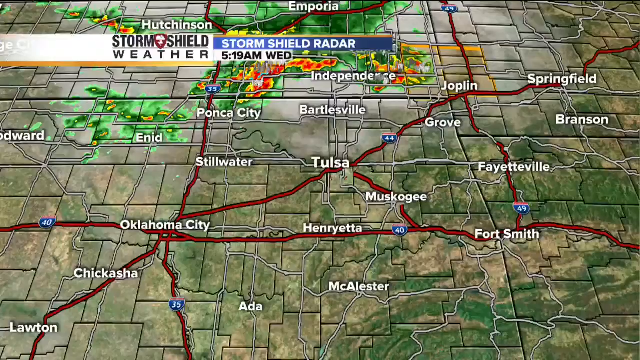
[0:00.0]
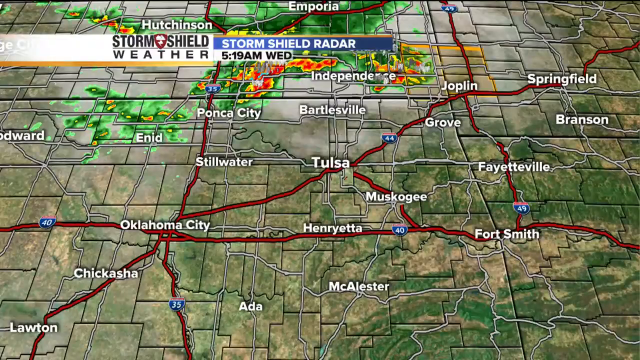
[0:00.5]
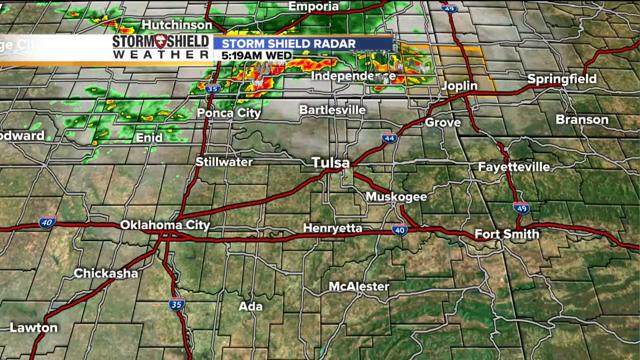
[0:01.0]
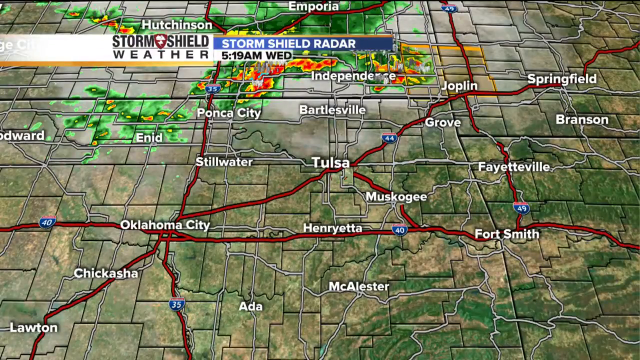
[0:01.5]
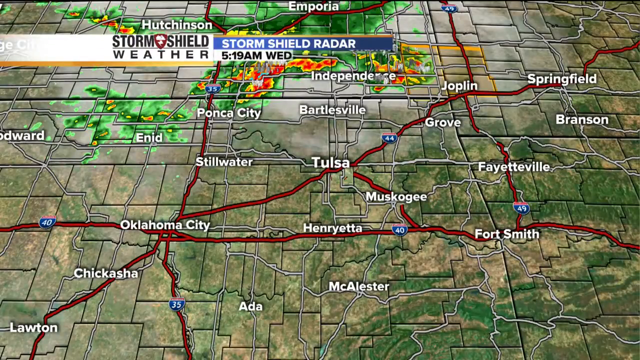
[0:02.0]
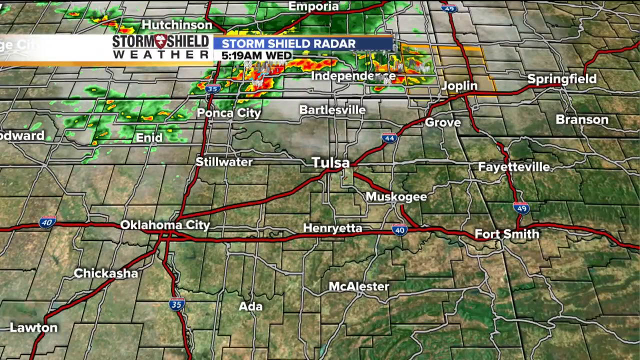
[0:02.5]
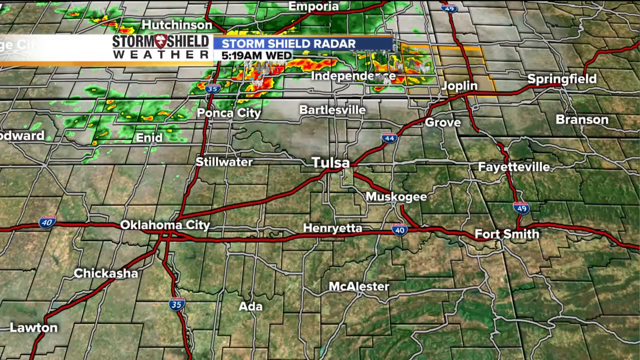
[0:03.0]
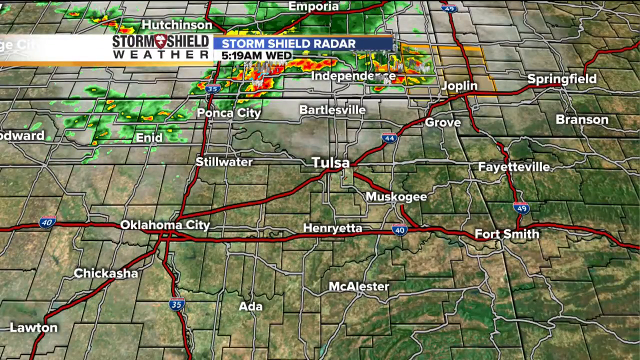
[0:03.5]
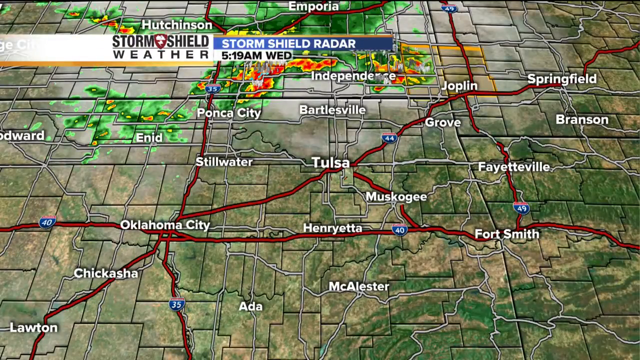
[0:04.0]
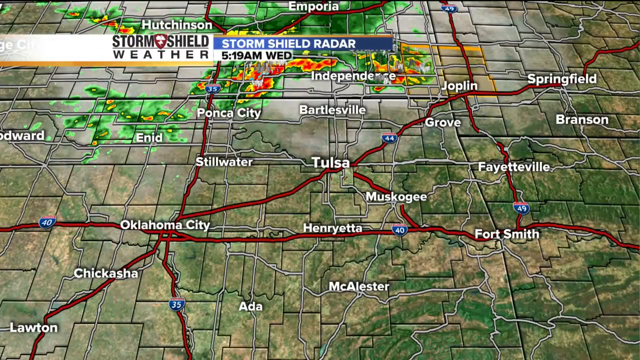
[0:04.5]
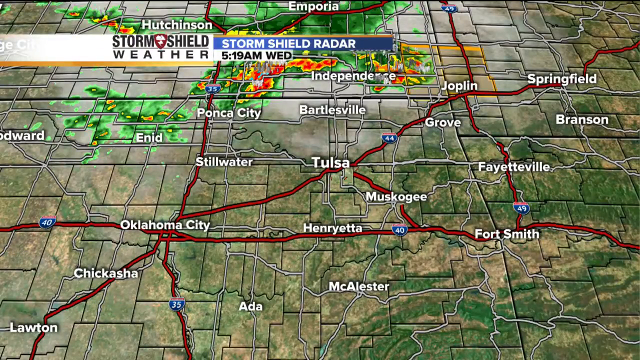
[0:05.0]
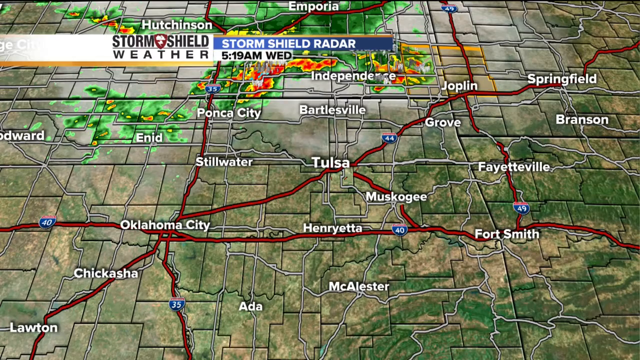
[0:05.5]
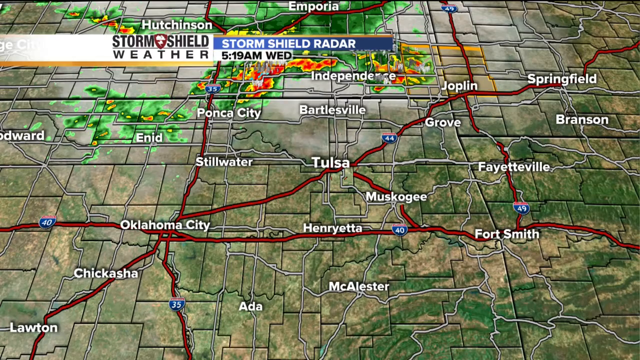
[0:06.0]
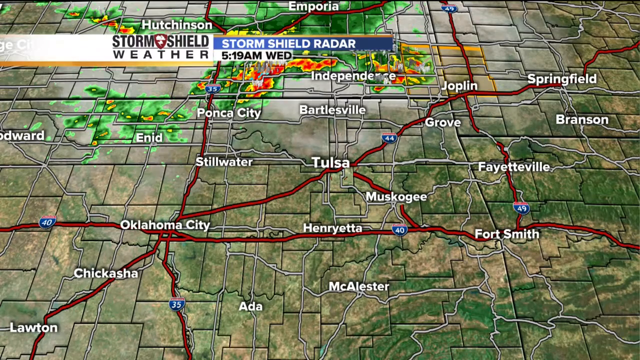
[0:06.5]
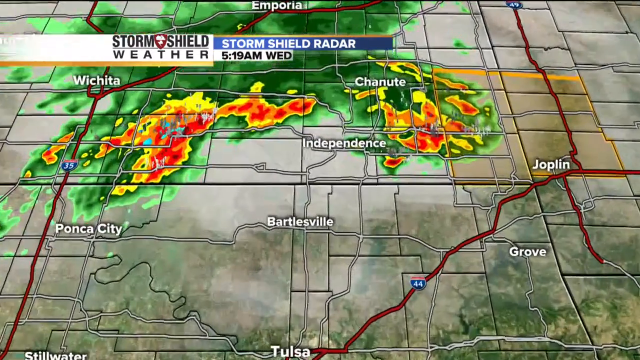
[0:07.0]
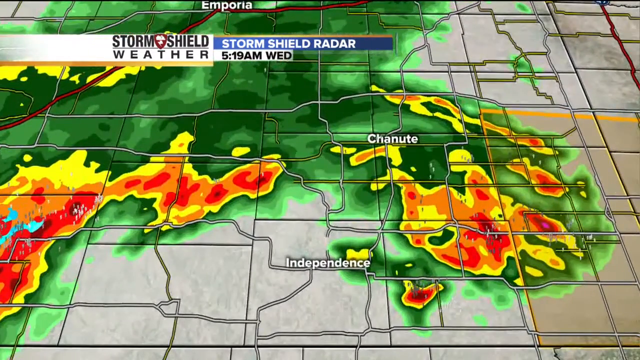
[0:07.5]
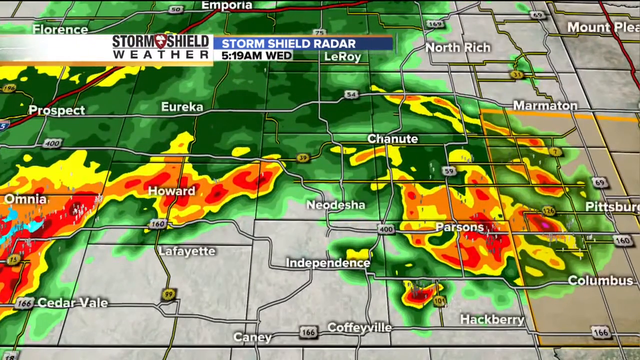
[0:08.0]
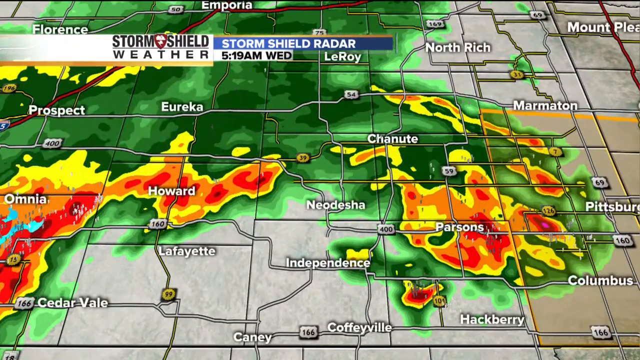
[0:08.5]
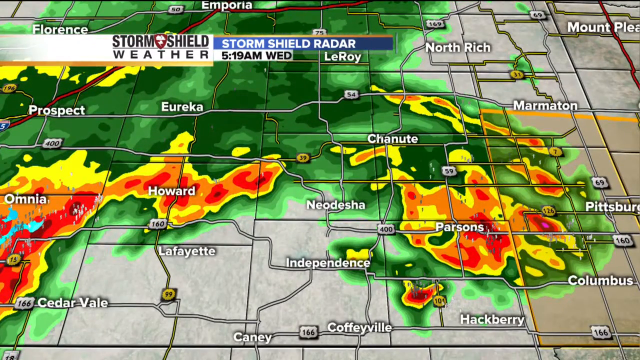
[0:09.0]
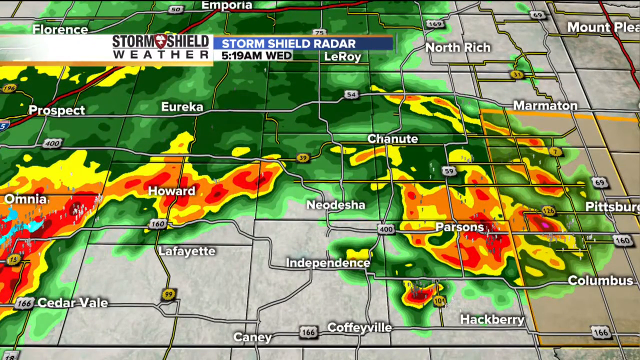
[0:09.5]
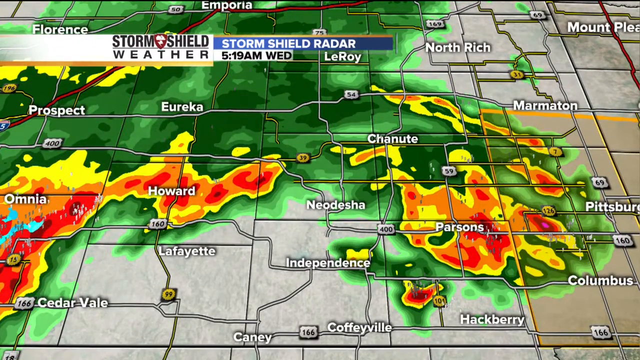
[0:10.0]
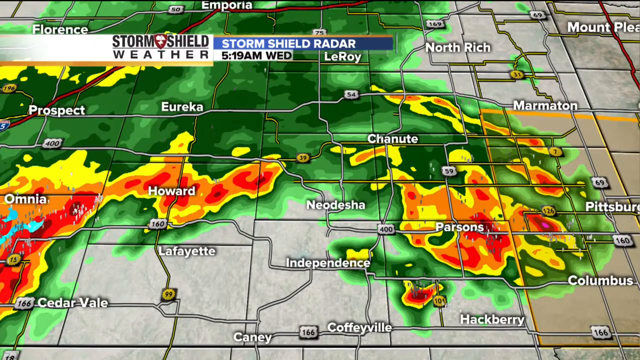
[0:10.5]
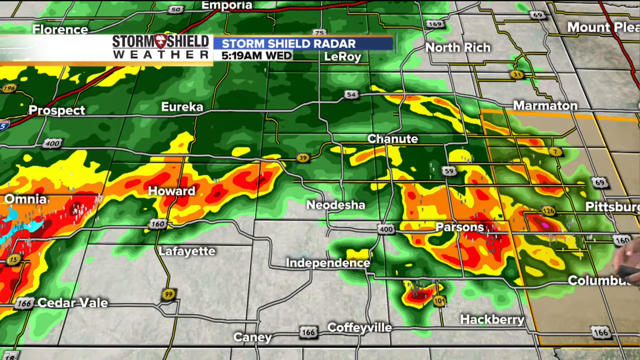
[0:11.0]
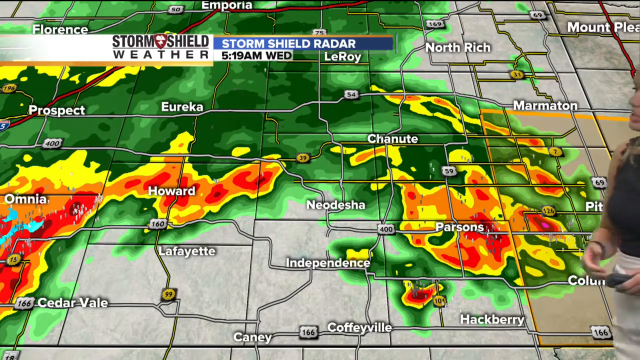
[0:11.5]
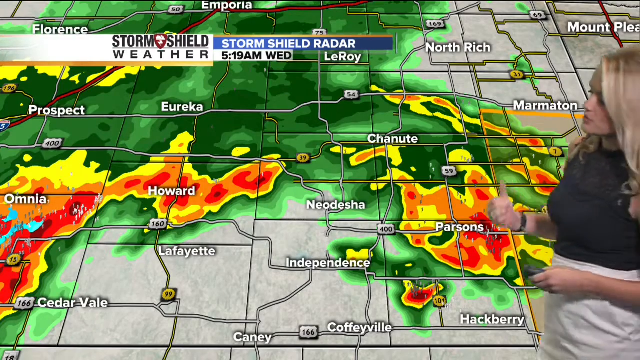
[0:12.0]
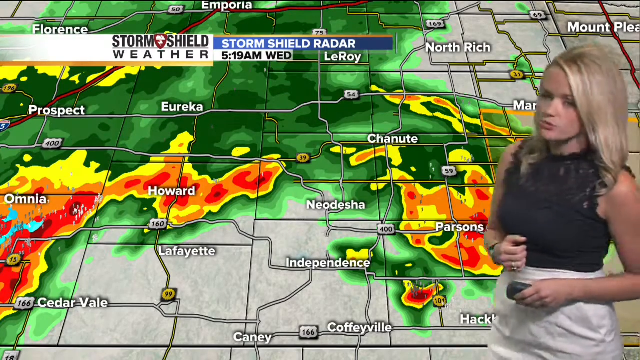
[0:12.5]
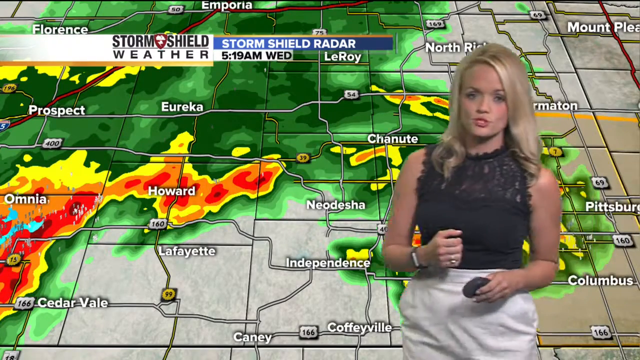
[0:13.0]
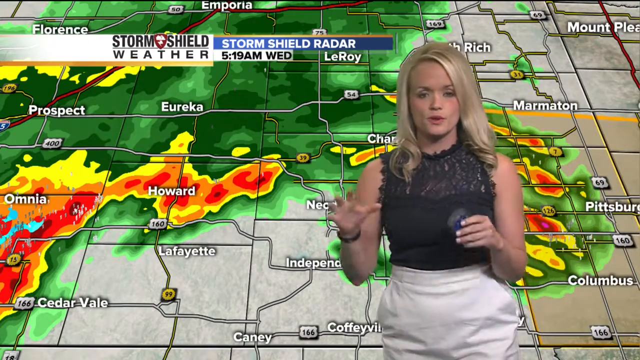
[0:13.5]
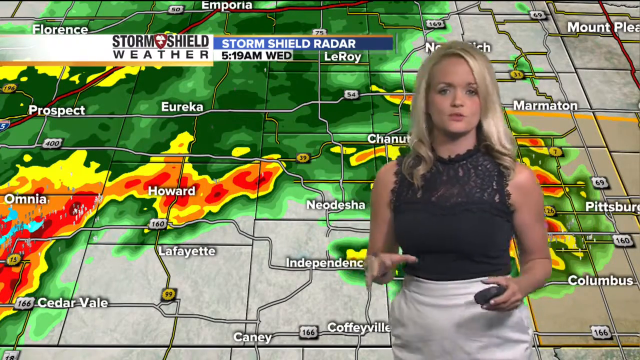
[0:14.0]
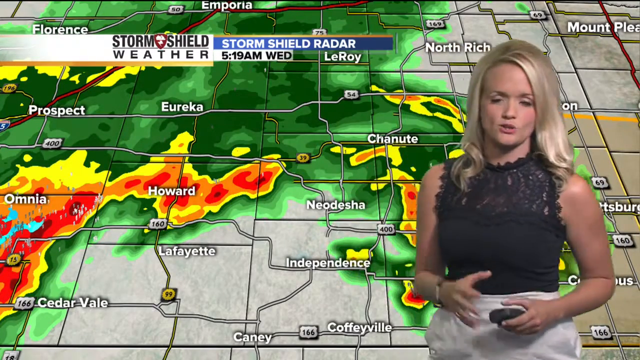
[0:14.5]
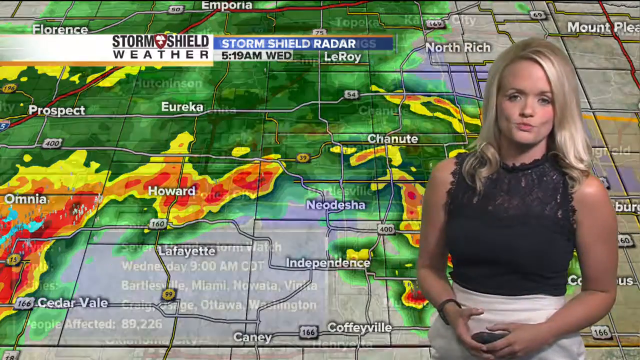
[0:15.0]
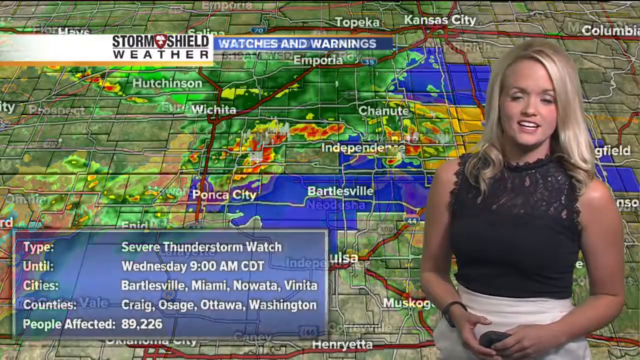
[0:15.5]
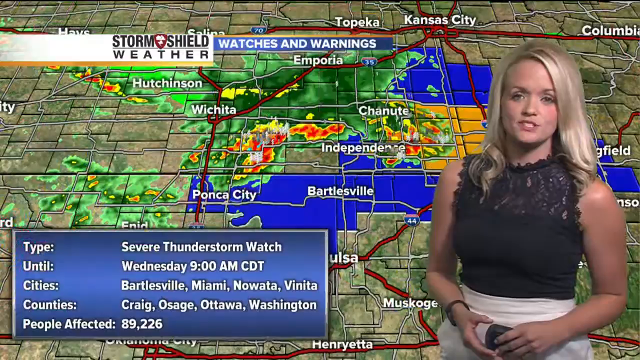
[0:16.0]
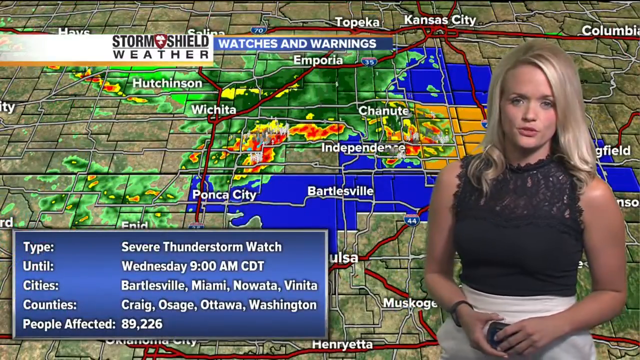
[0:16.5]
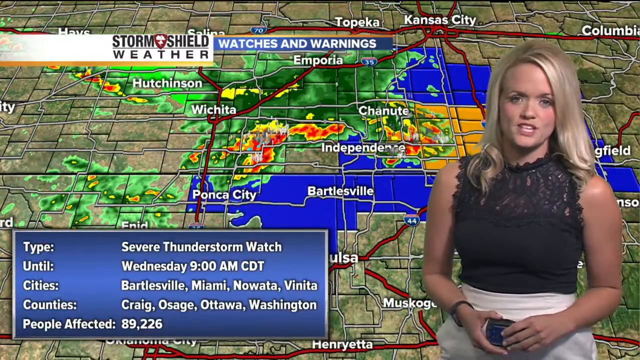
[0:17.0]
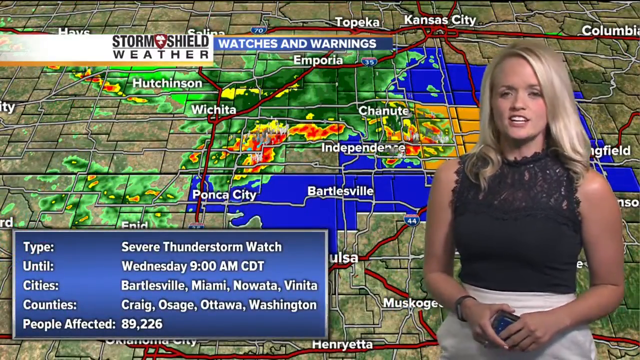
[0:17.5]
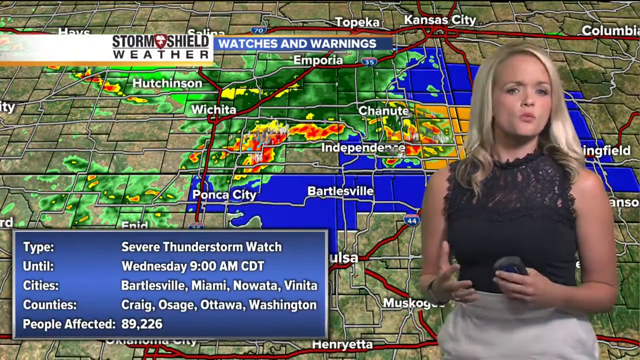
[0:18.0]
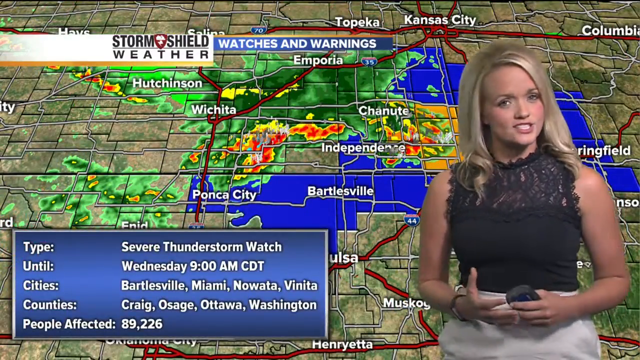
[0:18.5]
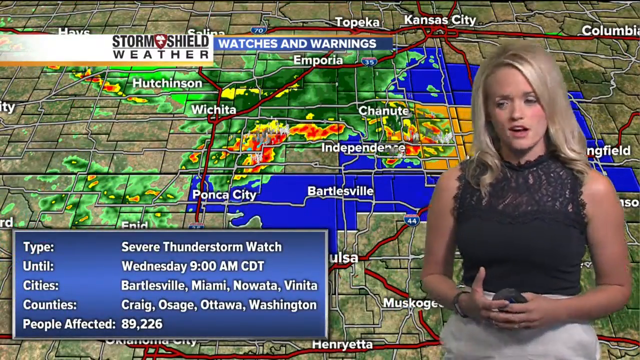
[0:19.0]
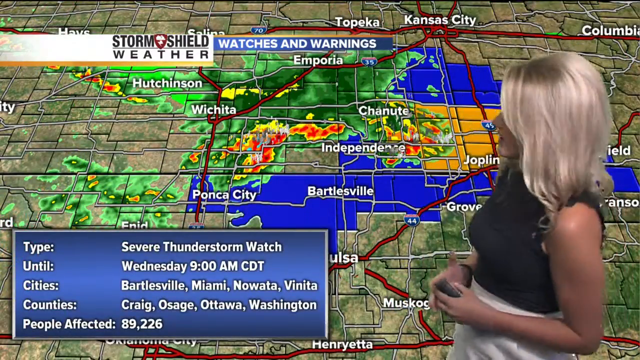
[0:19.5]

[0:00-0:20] A weather map appears, with red lines connecting the various cities and towns like roadways. A storm is shown in green, with red flashes indicating stronger storms. A woman with blonde hair, wearing a black shirt and a white skirt, comes into the screen and periodically returns. The towns include Oklahoma City toward the left corner, Chickasaw above it, and Fort Smith to the right. It is a storm weather advisory. The map itself is green, somewhat reminiscent of grass, with tannish blotches here and there indicating low-lying areas, and it is divided into sections, apparently one per county. In the upper left-hand corner is "Hutchinson's Steam Shield Weather," and this is a weather radar. The view zooms in on a storm system: green shows where the storm is landing, blotches of yellow and orange show more severe areas, with darker orange meaning a stronger storm, and deep purples in the very center of some of them mean the storm is very strong. The view then pulls back, showing the storm mostly isolated to the north.